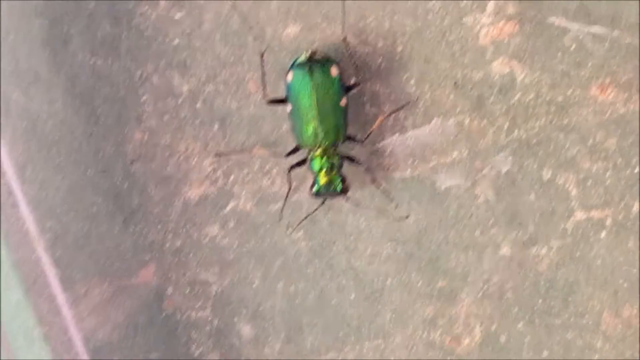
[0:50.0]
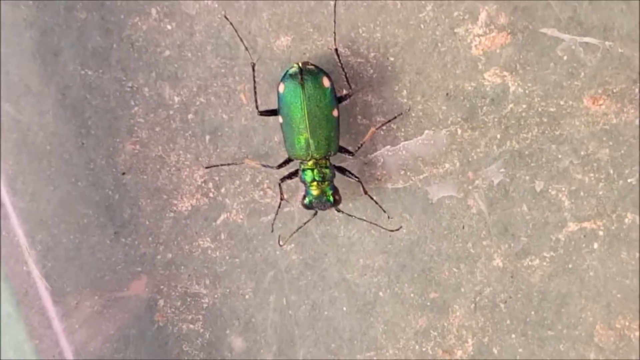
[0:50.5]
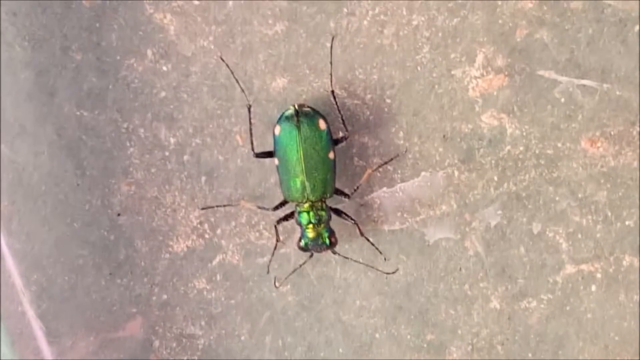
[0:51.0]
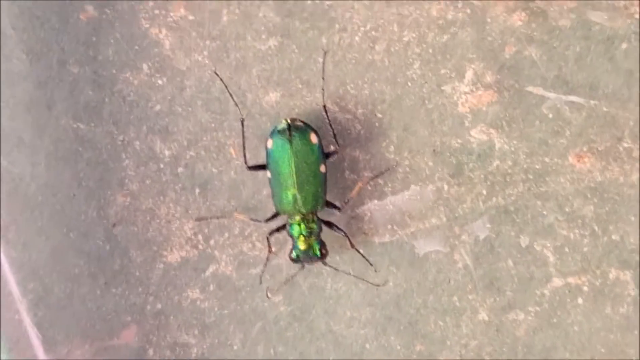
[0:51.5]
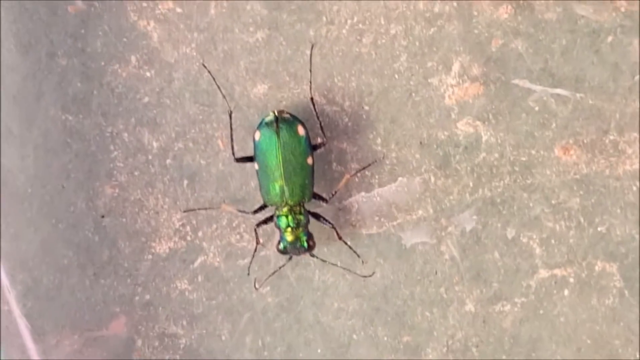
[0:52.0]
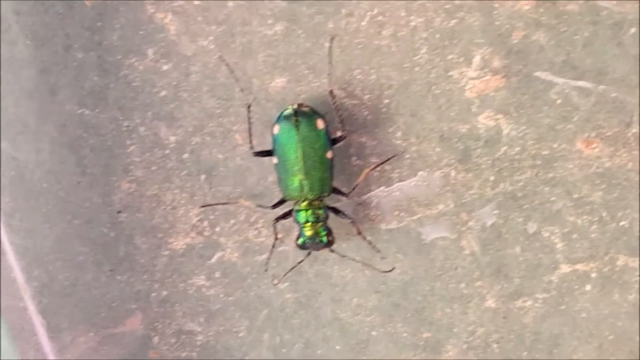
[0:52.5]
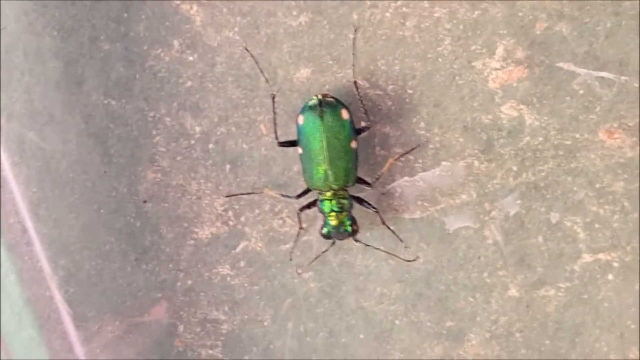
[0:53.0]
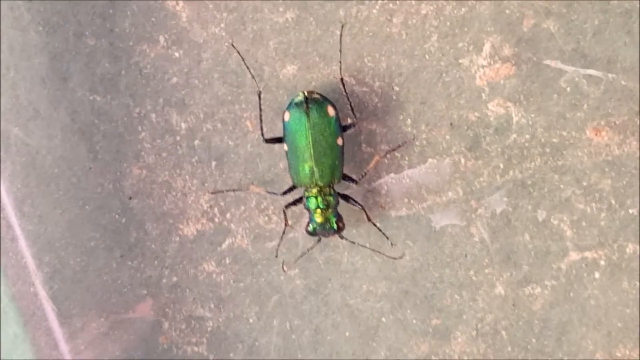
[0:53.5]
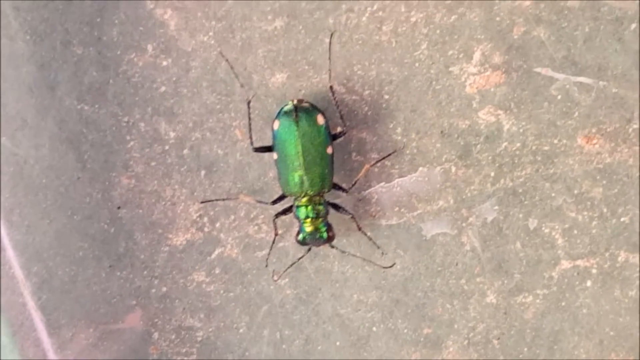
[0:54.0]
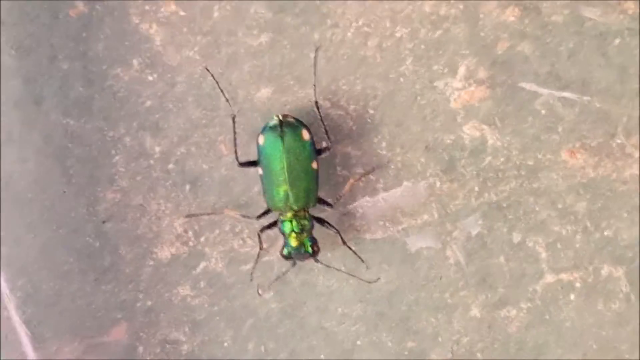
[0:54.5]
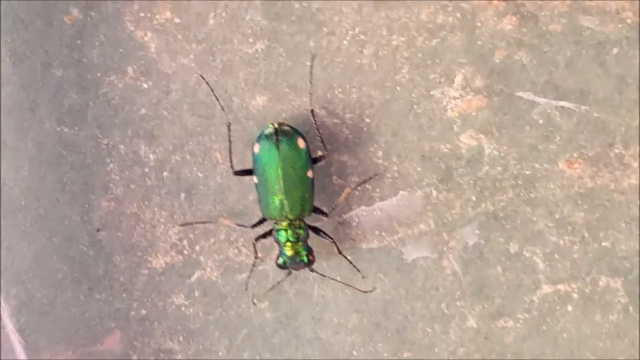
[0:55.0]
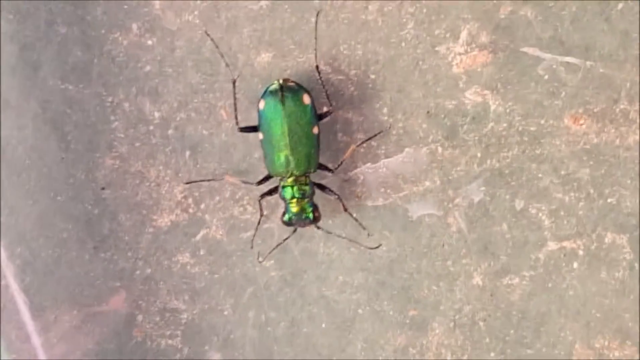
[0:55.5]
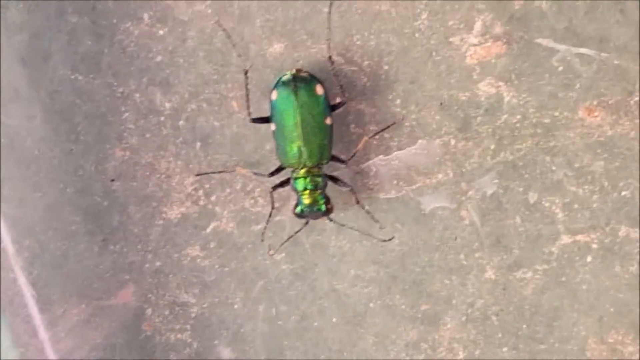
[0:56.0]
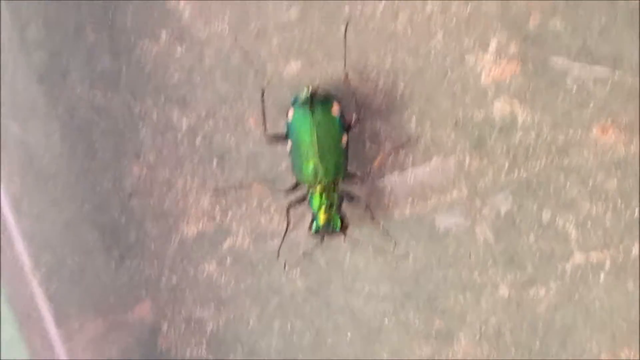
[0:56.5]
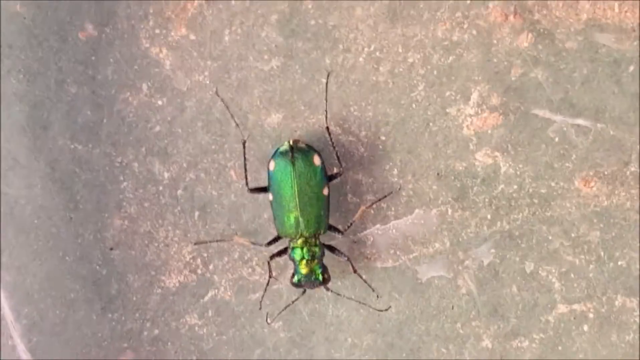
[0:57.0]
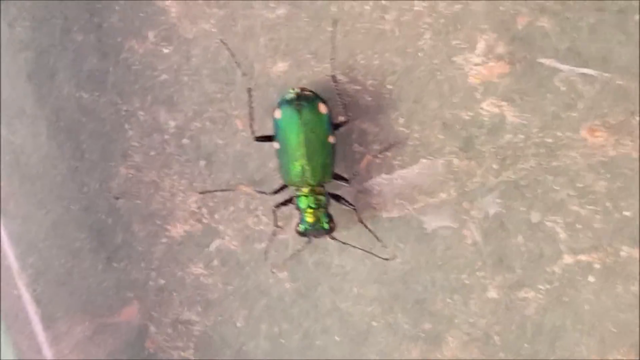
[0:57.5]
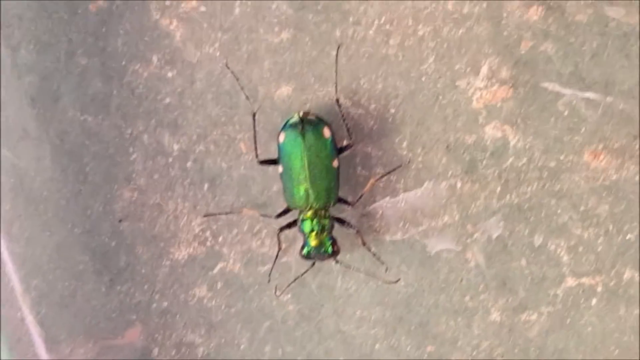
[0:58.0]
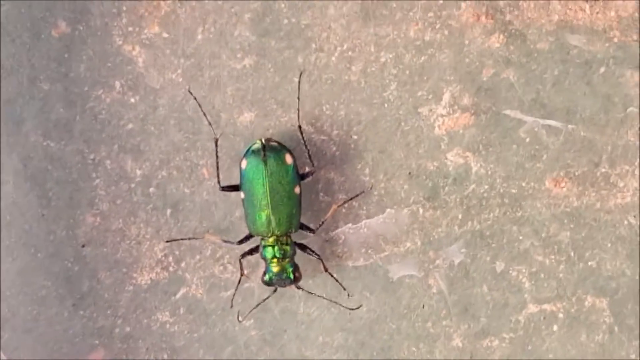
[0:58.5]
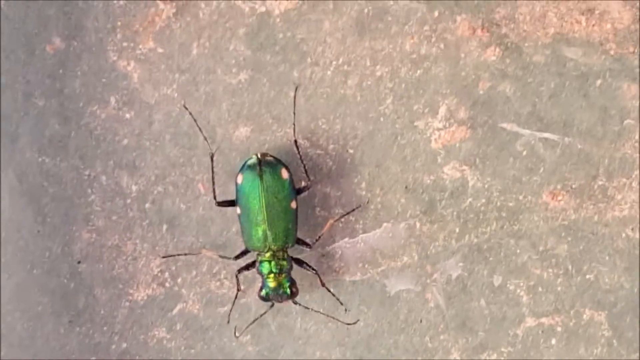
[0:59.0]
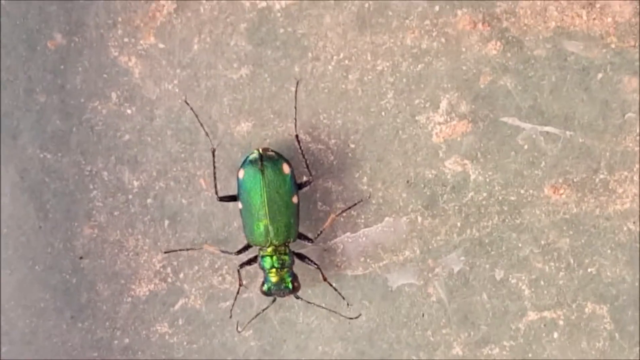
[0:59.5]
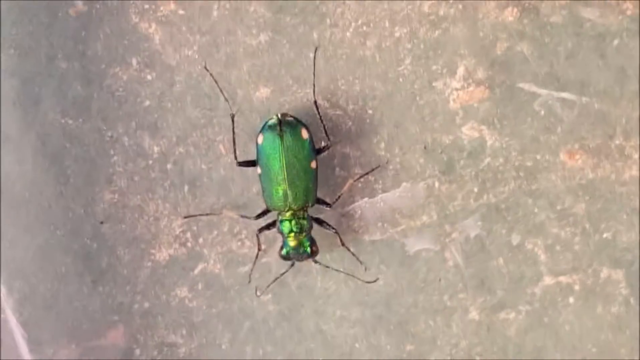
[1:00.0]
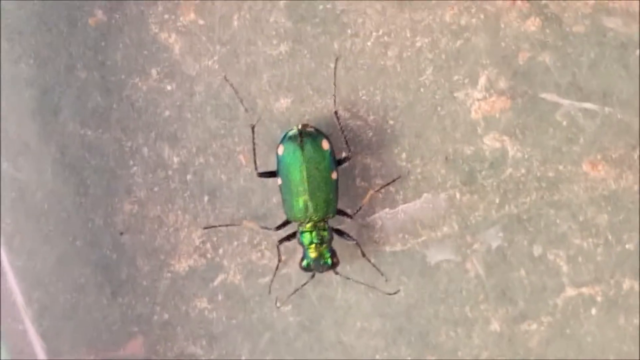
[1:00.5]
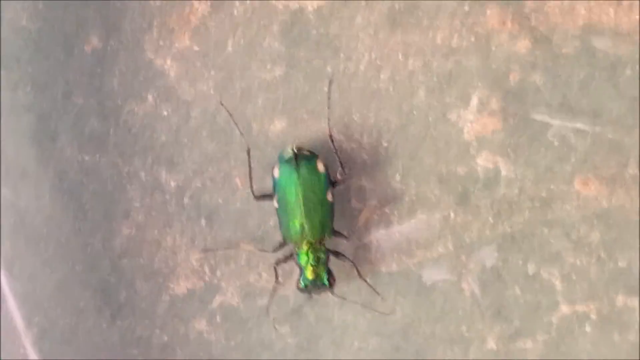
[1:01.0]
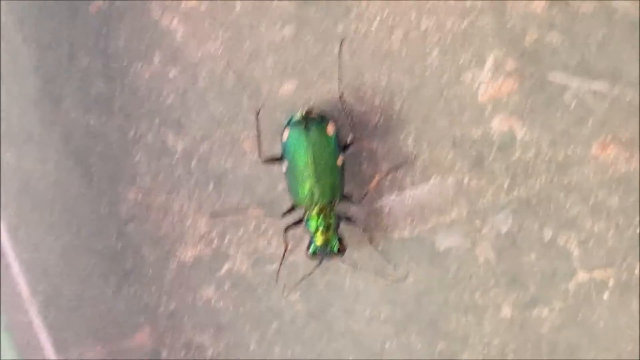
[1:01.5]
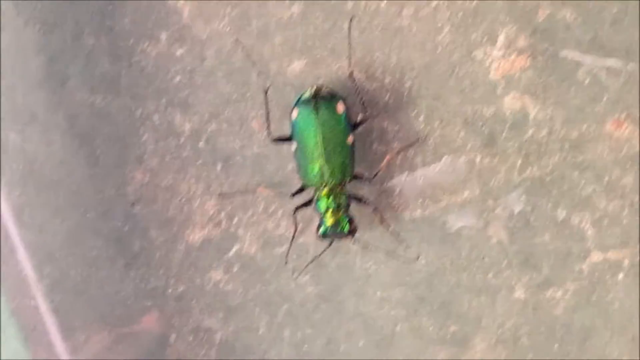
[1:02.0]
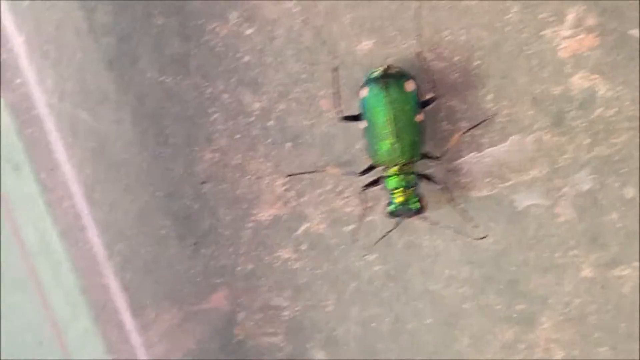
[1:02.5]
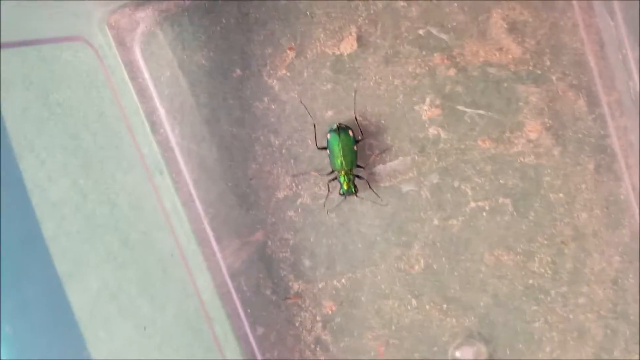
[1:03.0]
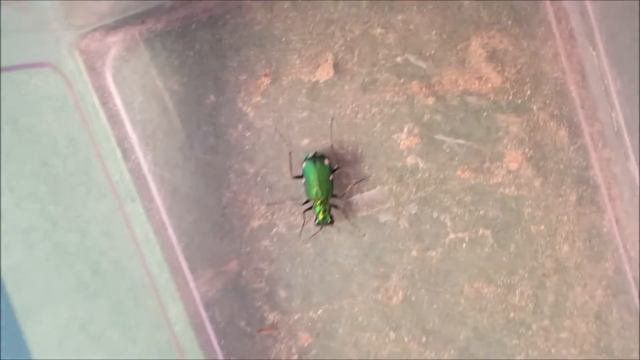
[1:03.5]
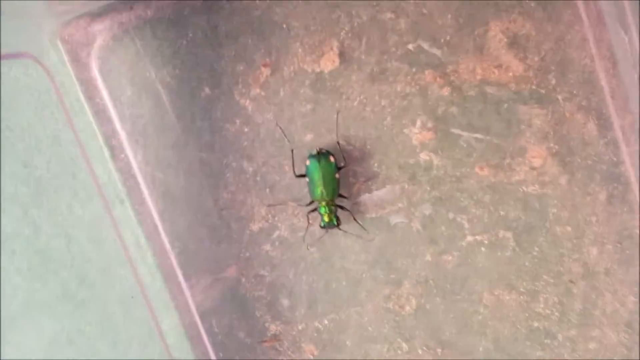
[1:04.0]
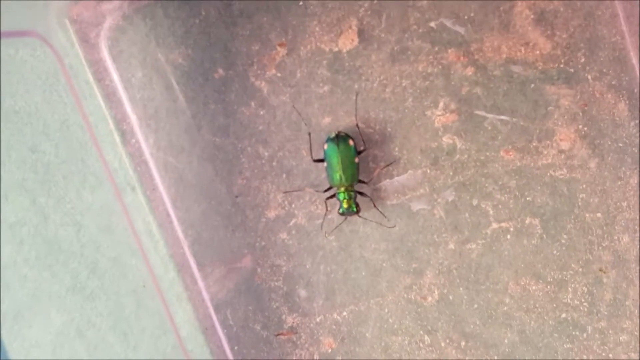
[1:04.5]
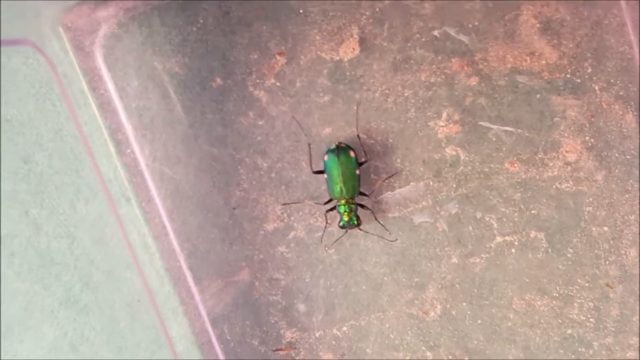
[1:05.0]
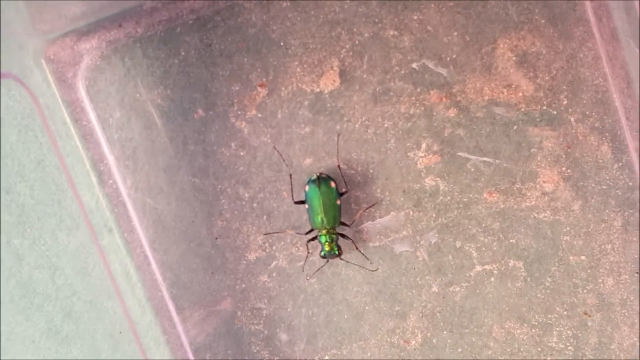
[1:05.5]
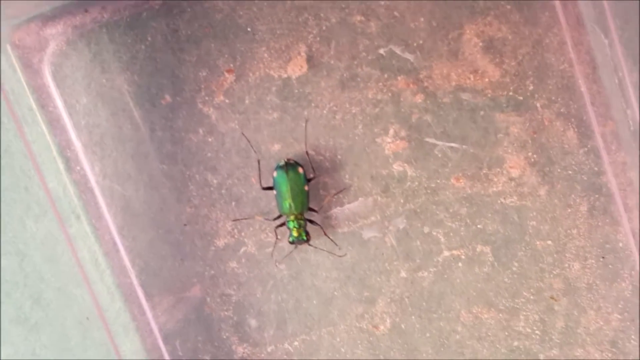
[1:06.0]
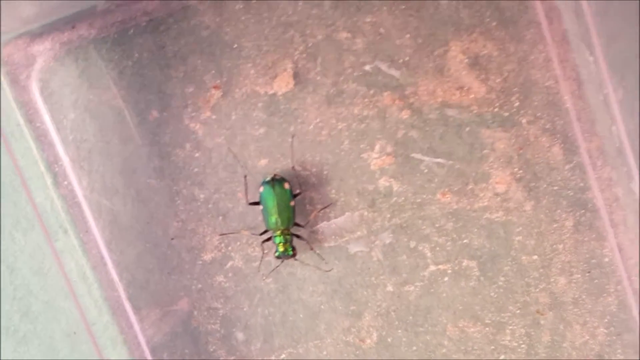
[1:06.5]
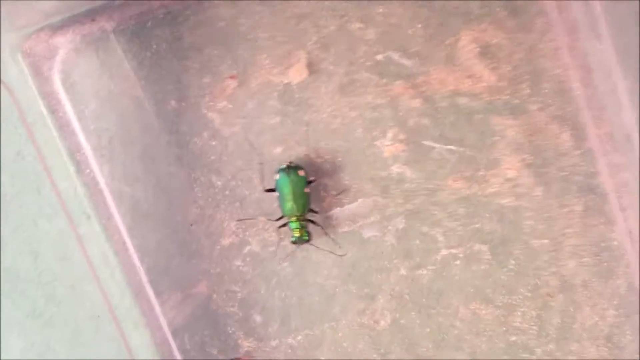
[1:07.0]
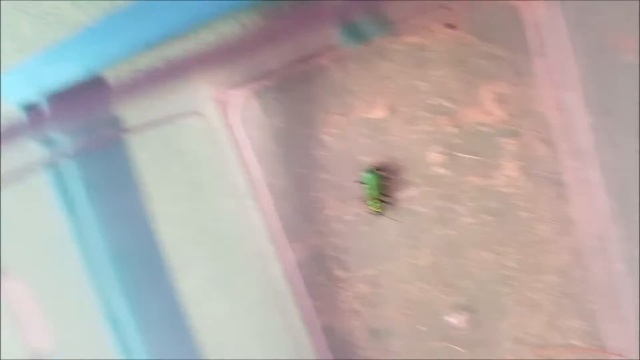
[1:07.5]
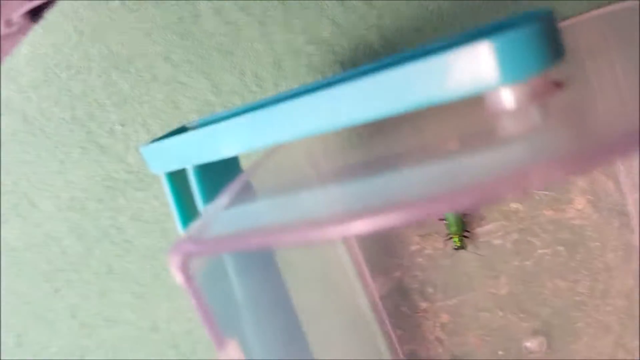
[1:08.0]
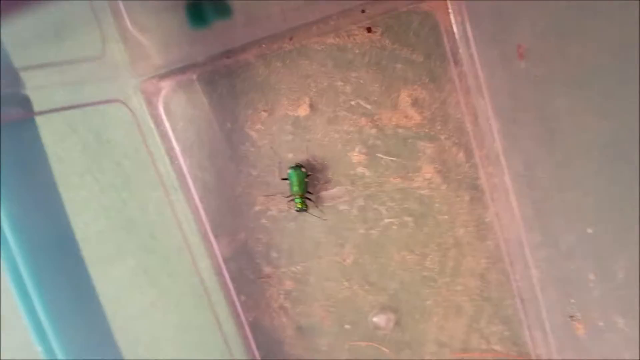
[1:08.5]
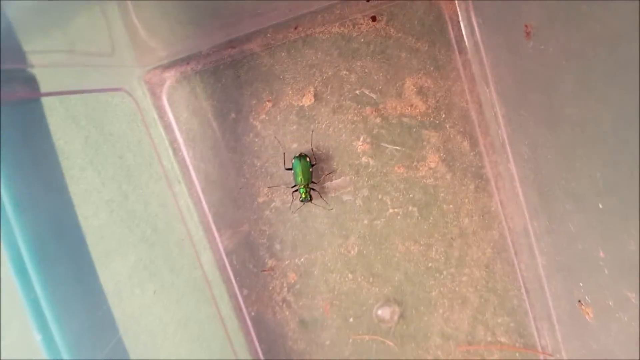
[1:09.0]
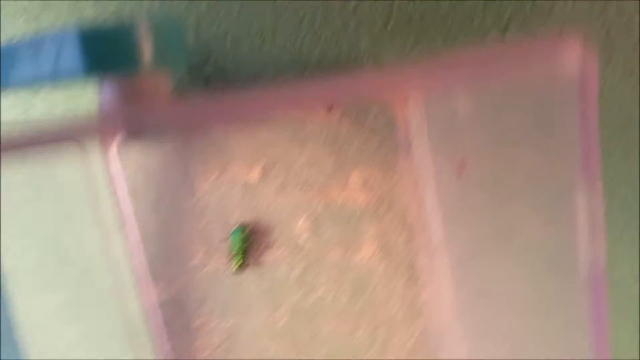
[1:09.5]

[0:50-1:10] The view stays zoomed in on the beetle. Its two eyes are visible right at the front, and there are many different sections around the area connecting its head to its body. It does not seem to be moving, staying still. The plastic container has a bit of a pink tinge, and when the camera zooms out a little, a lightish greeny-blue handle running across it becomes visible. The bottom of the container looks quite messy and seems to have some residue in it, possibly sand. The zoom out also gives a better view of the table, which has a texture a bit like textured wallpaper. The beetle seems frozen in one spot with no visible movement. Two white spots apparently appear at its back.